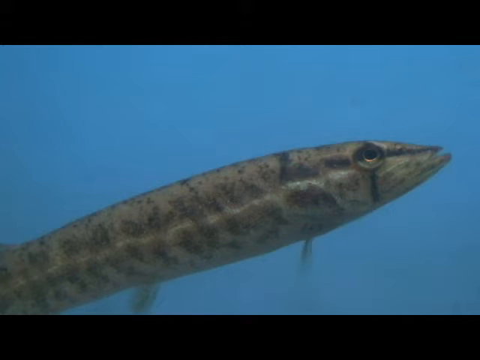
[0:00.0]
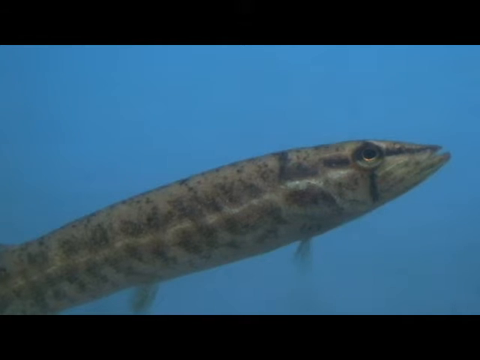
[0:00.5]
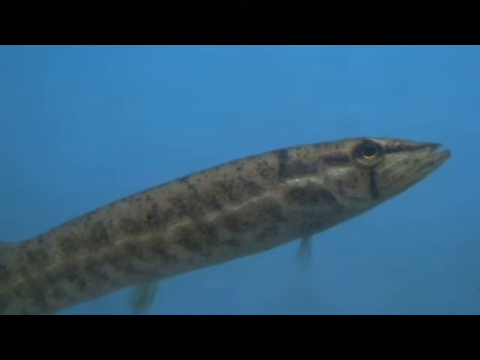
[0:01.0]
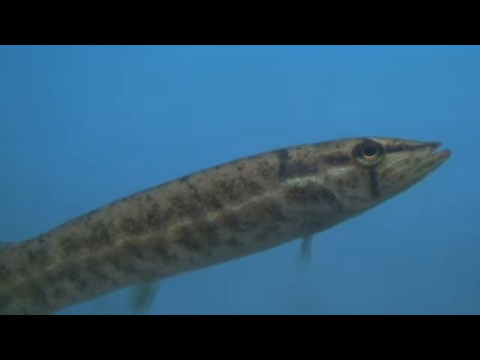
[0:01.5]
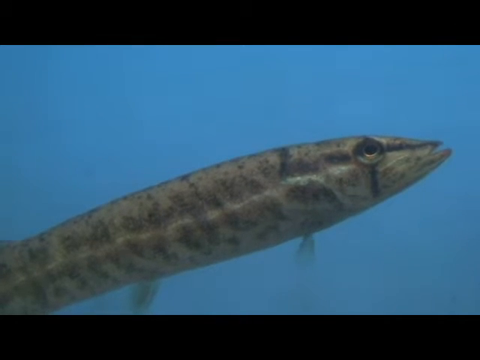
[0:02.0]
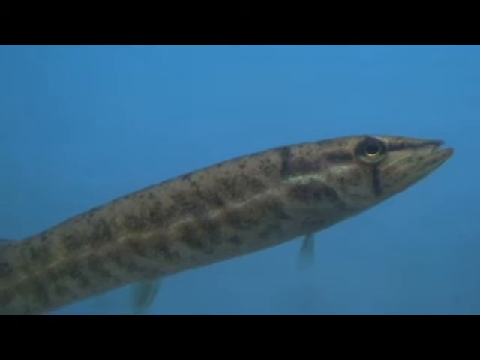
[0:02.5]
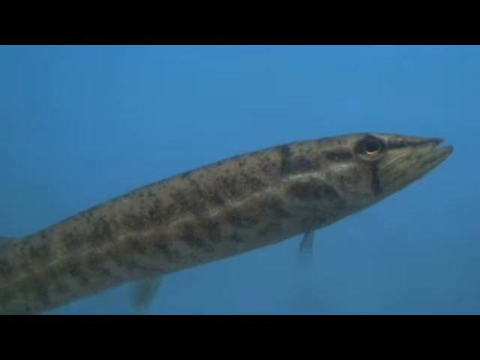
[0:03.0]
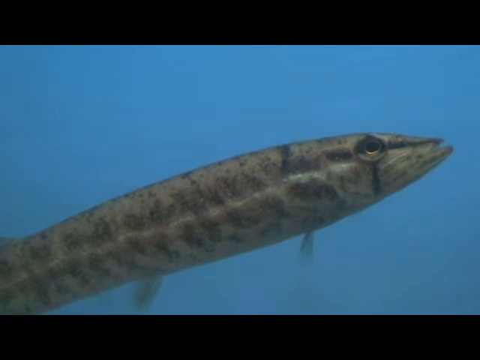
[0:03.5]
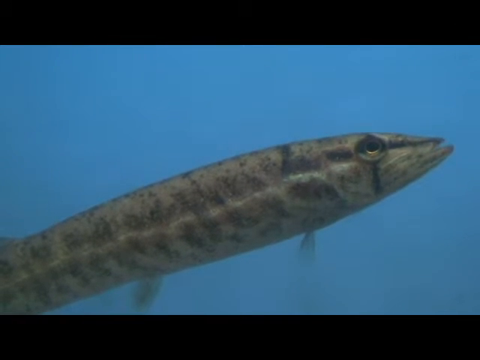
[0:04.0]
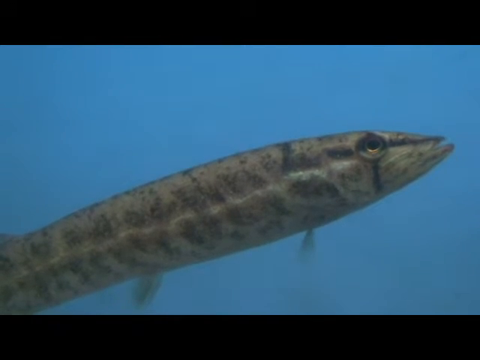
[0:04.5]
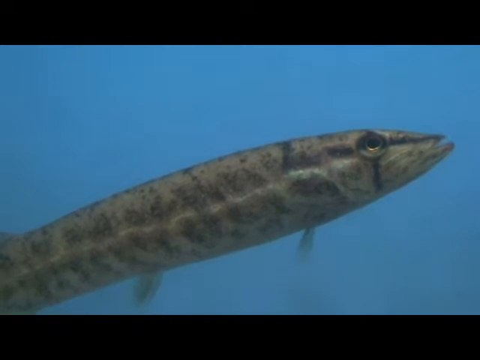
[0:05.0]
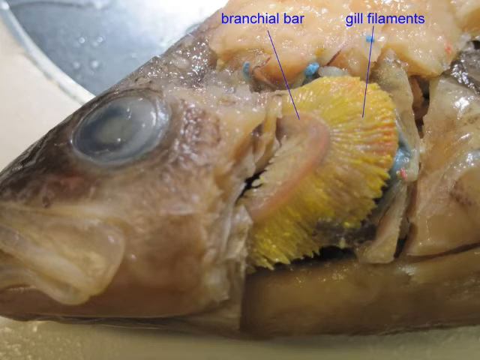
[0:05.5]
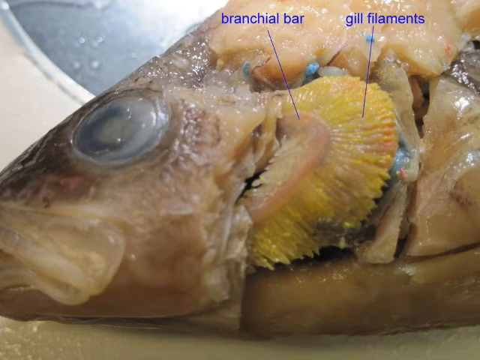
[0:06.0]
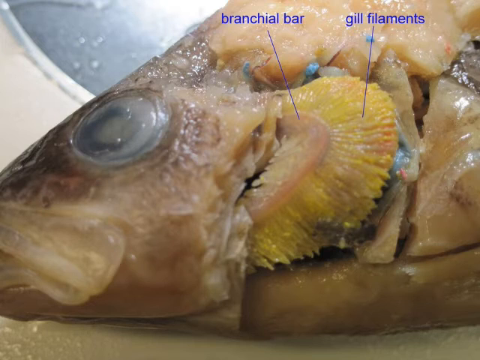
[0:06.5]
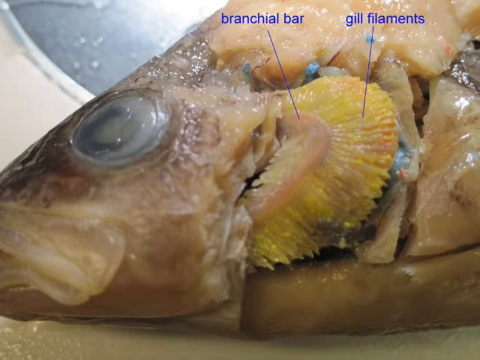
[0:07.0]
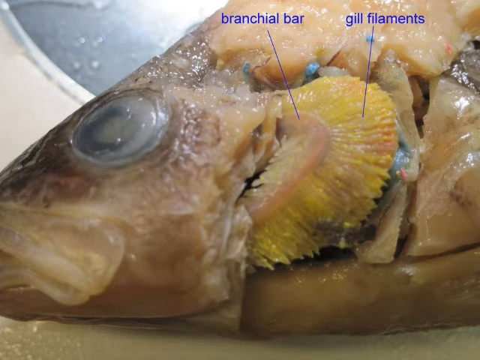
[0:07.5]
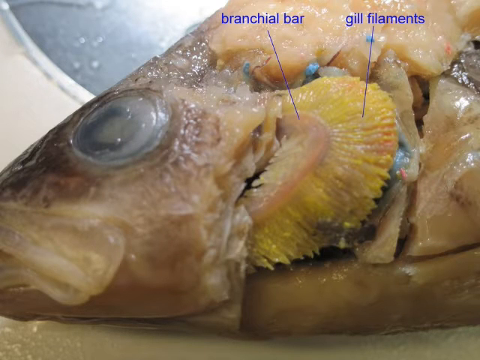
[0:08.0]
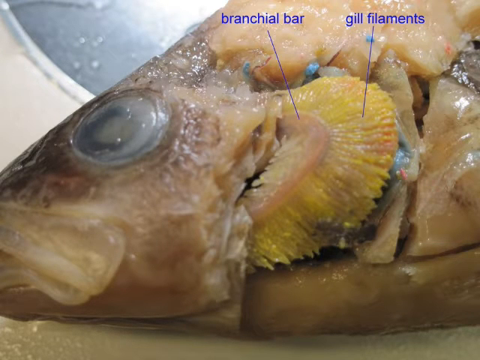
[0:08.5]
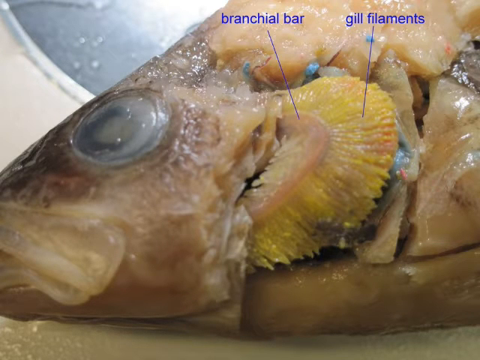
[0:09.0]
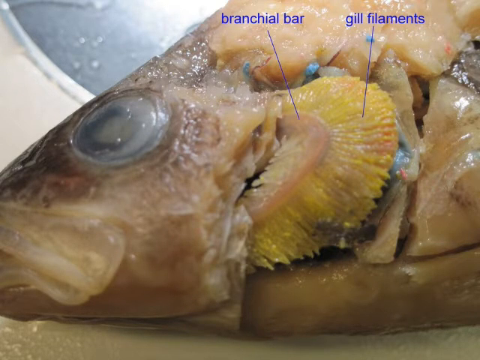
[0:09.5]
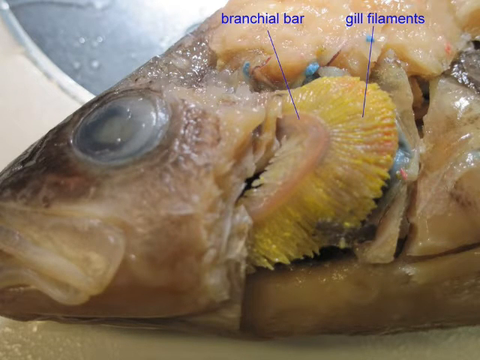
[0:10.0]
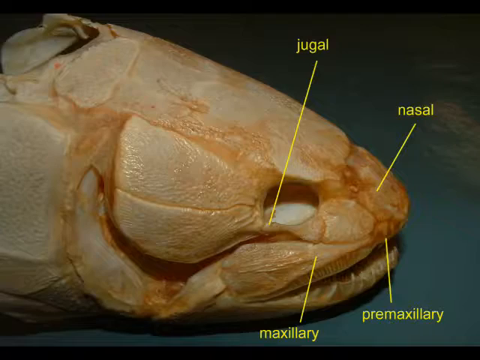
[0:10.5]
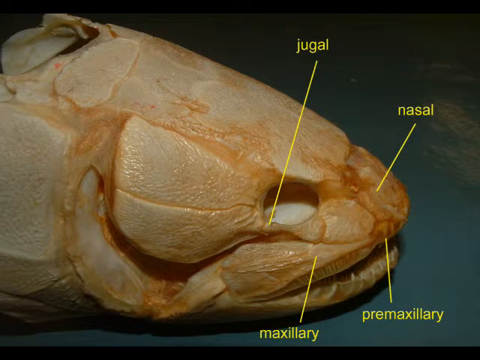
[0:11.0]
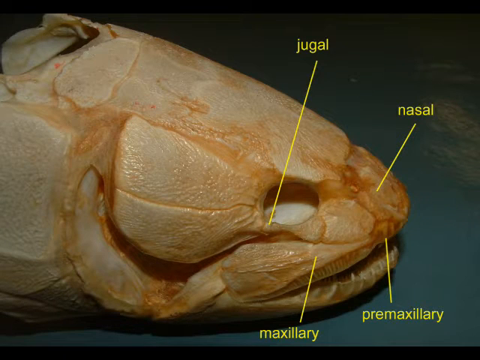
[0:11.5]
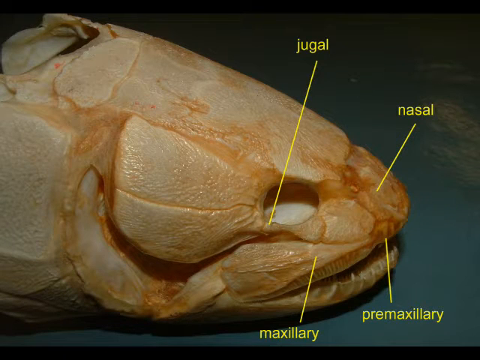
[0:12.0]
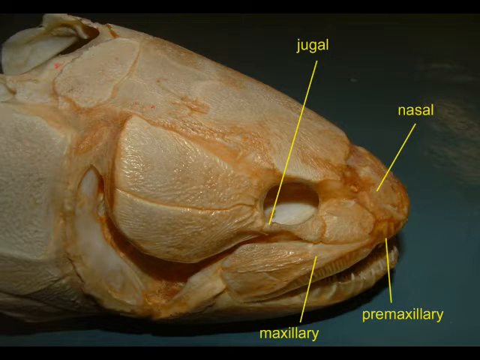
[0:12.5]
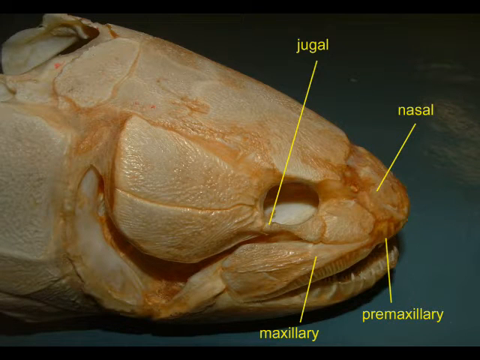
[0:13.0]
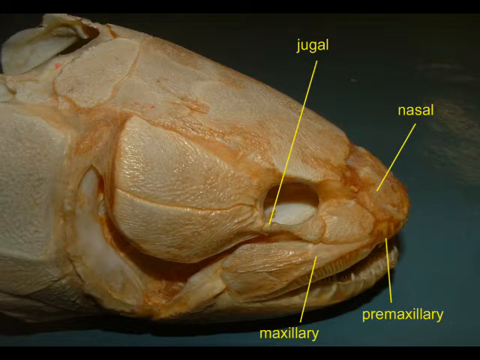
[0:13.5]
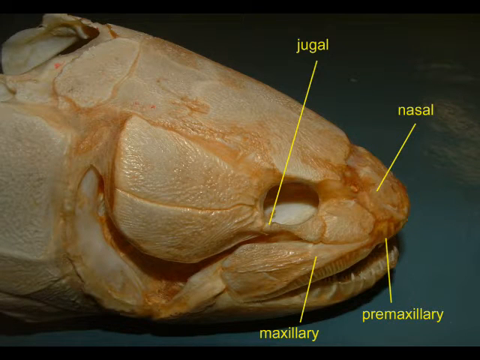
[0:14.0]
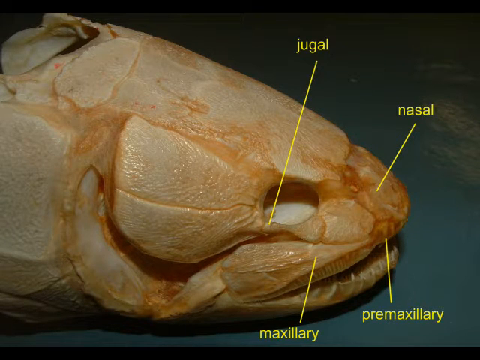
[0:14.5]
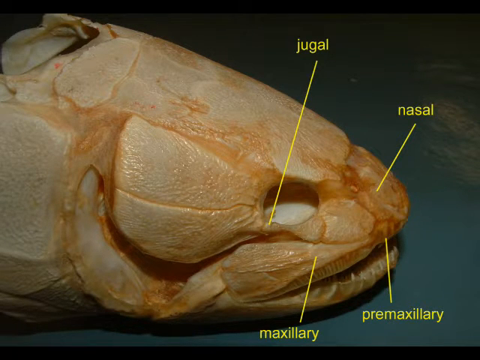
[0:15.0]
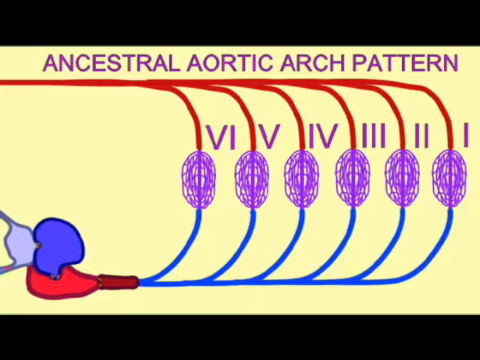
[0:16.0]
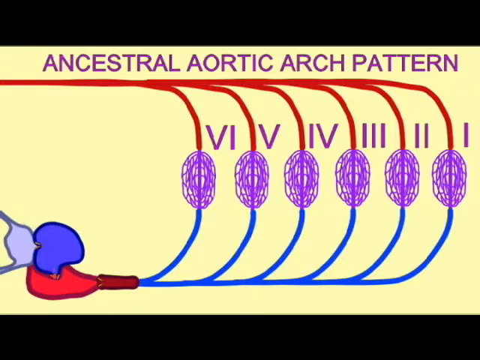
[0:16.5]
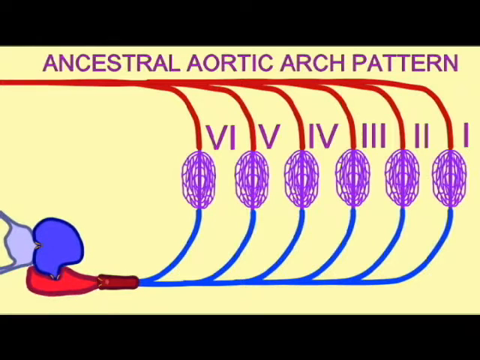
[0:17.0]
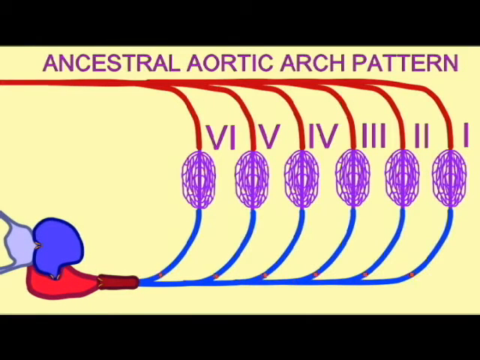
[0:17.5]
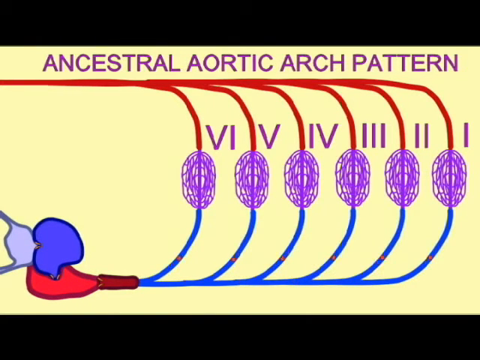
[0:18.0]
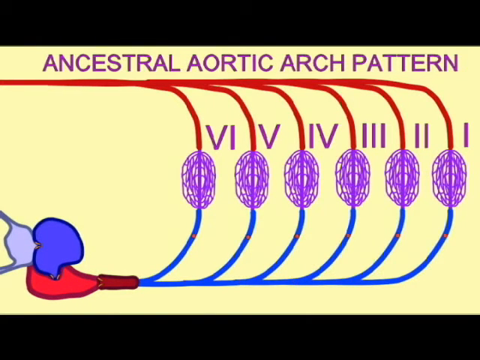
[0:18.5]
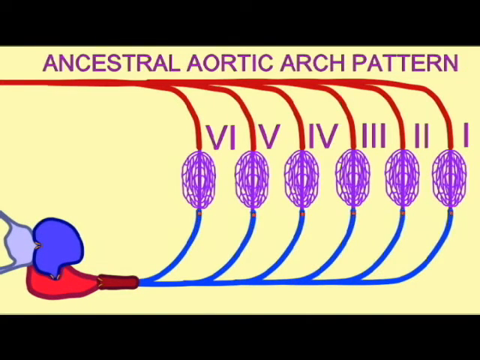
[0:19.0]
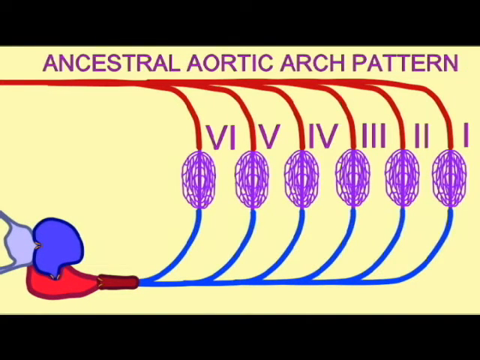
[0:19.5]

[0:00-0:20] A dull gray fish swims from the bottom left corner of the screen toward the right against a blue background that looks like water. The video then moves to a picture of a fish showing the internal part just behind its eye, with blue captions and pointing lines marking the brachial bar and the gill filaments. Next comes another fish with its skin removed; it is sandy in color, its eye has been removed, and pointers indicate the jugal, the nasal and the premaxillary. Another skinned fish follows, with a pointer whose label cannot be made out. Then an ancestral aortic arch pattern appears: six curved edges, each with a purple orb at its center, labeled from right to left in Roman numerals 1 through 6. They are connected to parts in the bottom left corner of the screen, which pulse and move.